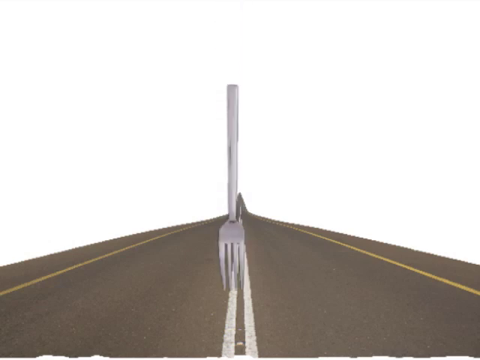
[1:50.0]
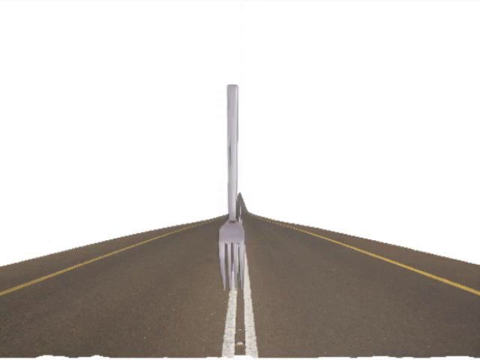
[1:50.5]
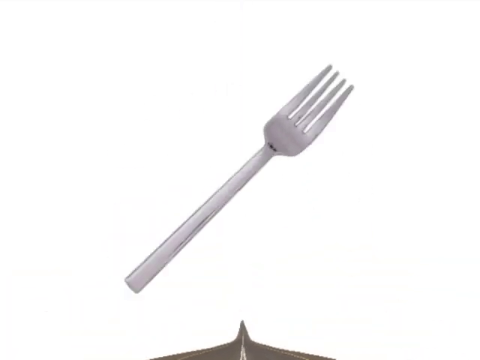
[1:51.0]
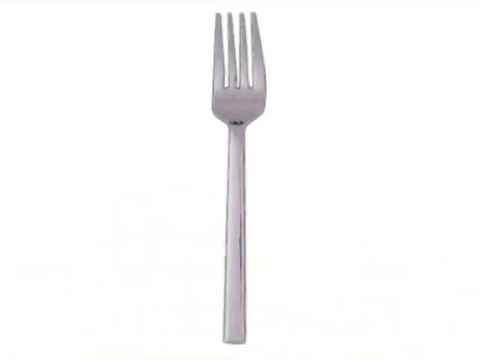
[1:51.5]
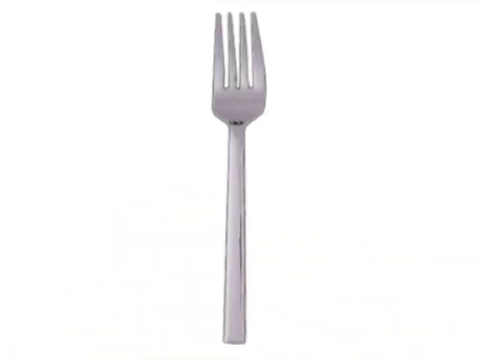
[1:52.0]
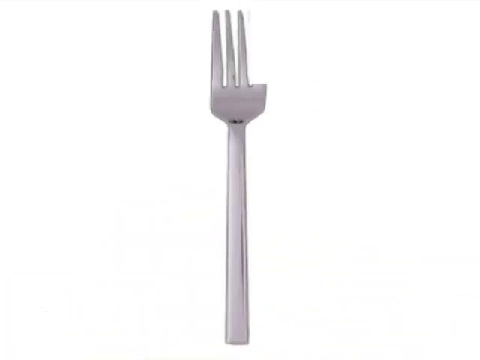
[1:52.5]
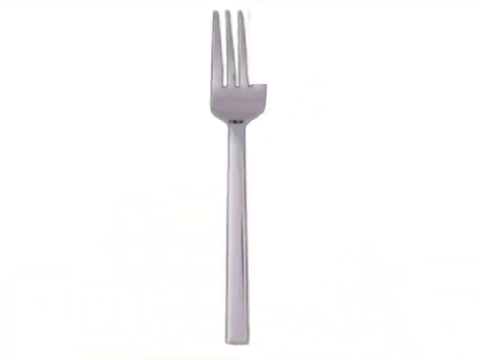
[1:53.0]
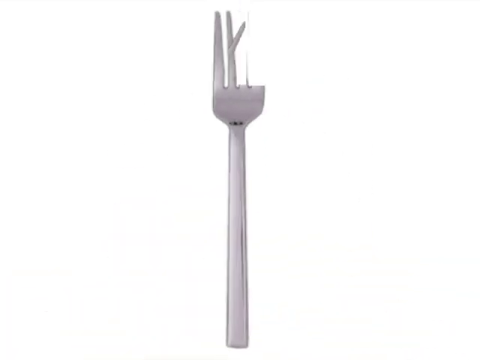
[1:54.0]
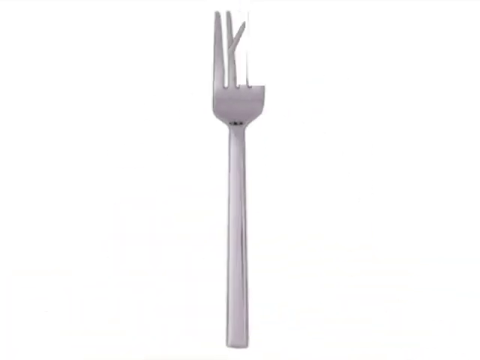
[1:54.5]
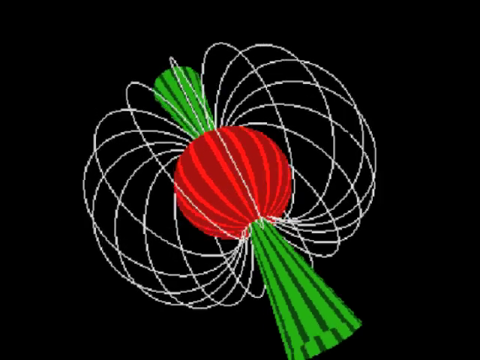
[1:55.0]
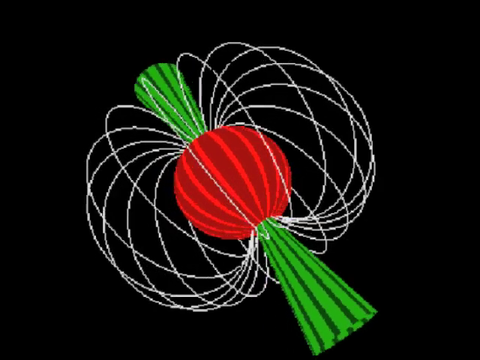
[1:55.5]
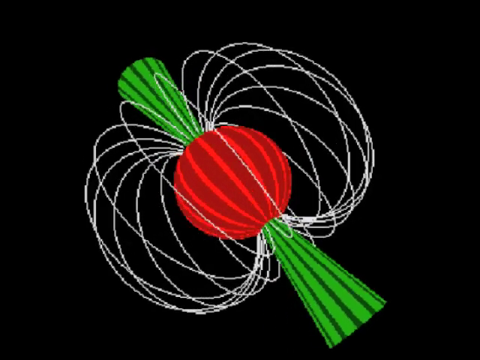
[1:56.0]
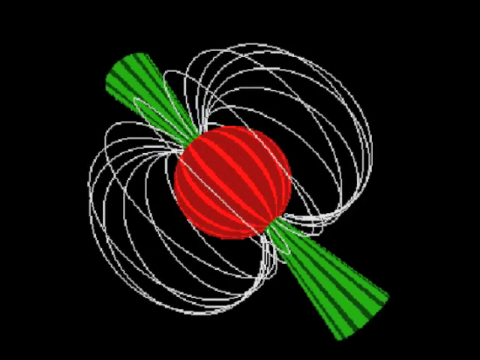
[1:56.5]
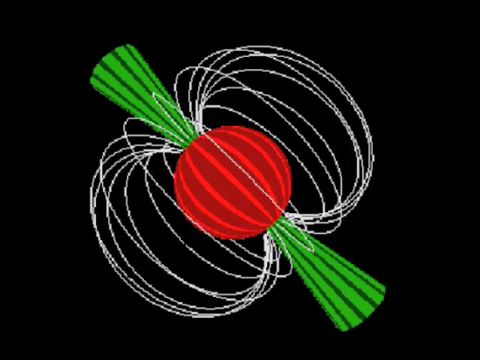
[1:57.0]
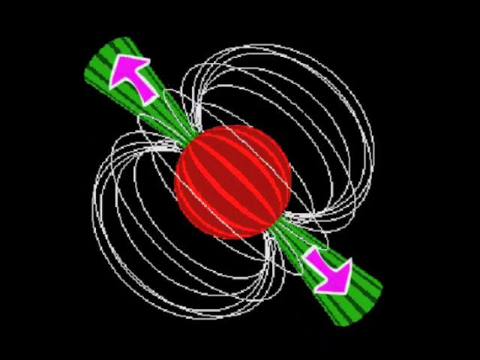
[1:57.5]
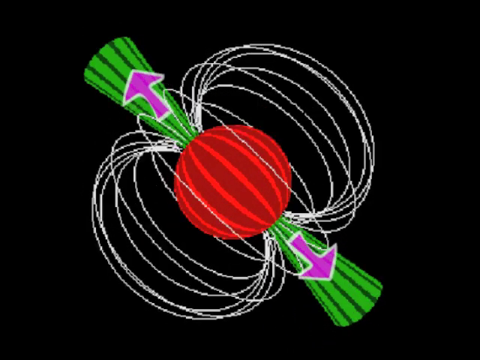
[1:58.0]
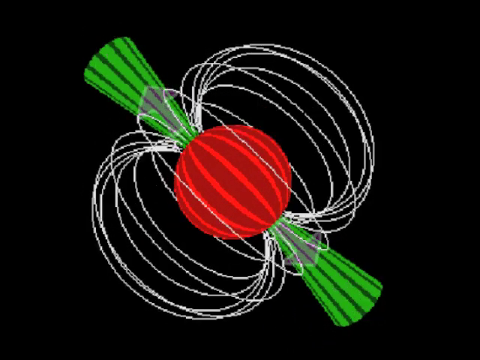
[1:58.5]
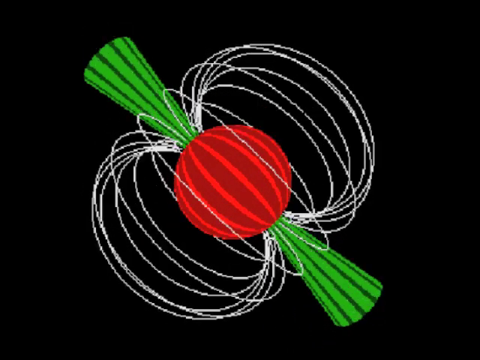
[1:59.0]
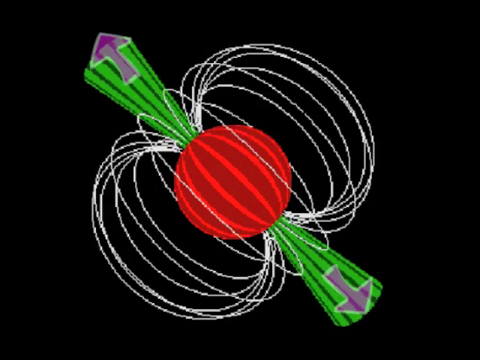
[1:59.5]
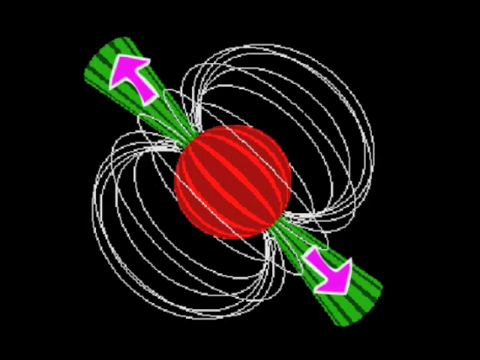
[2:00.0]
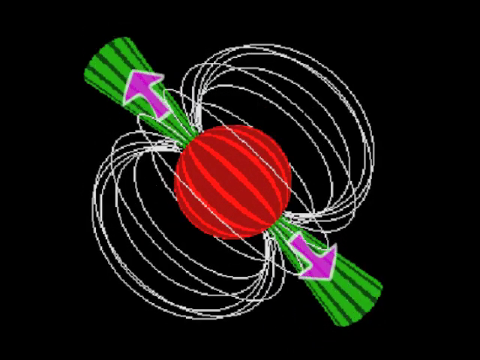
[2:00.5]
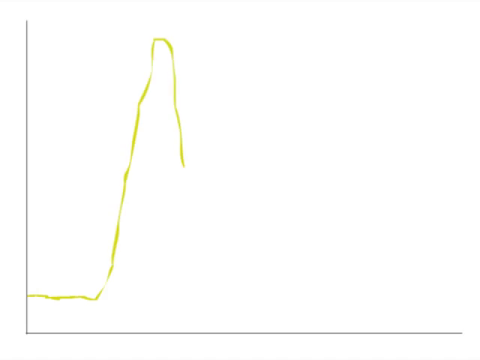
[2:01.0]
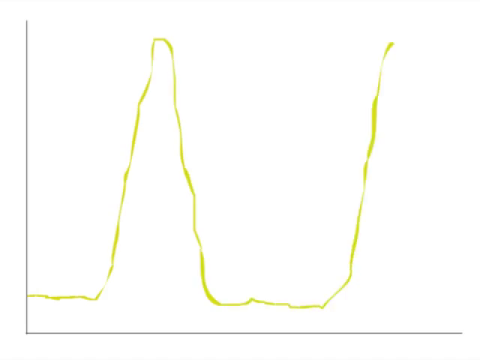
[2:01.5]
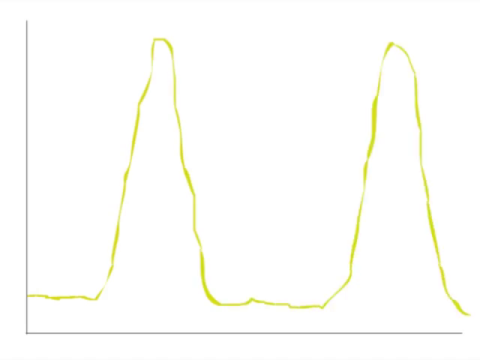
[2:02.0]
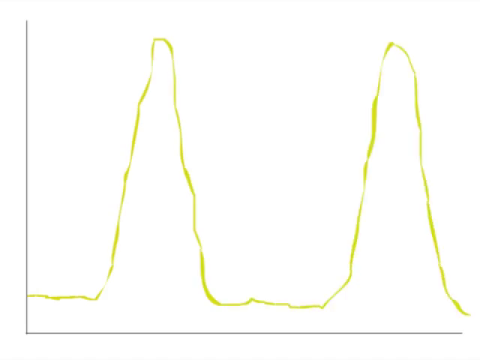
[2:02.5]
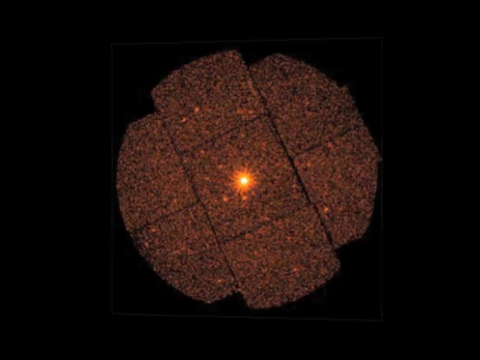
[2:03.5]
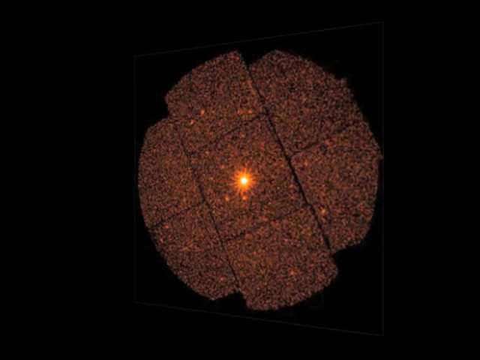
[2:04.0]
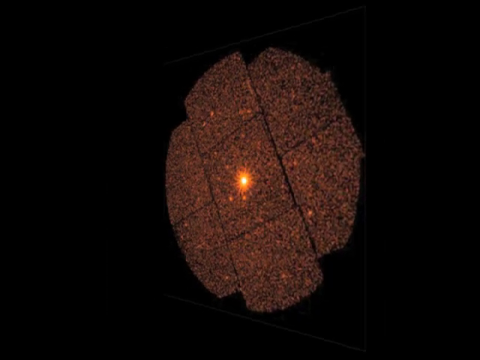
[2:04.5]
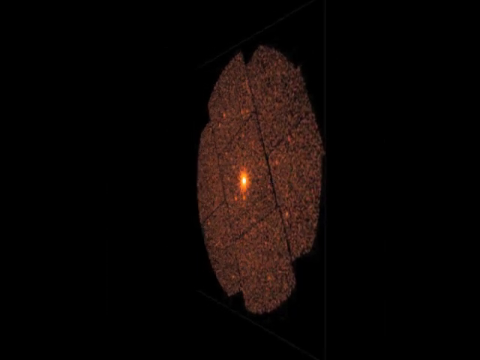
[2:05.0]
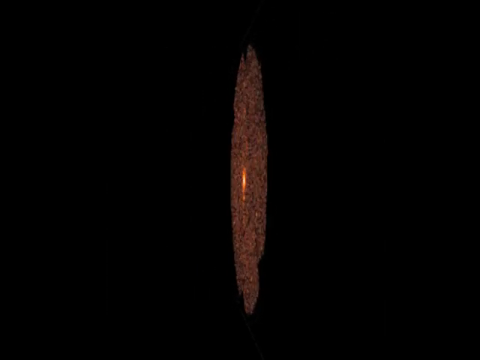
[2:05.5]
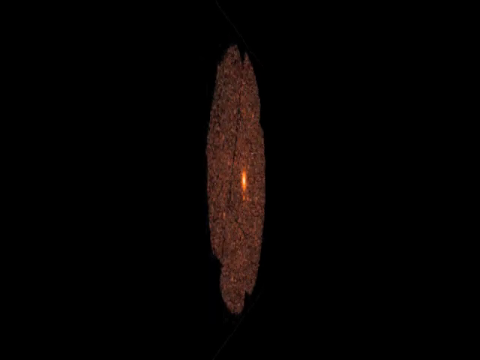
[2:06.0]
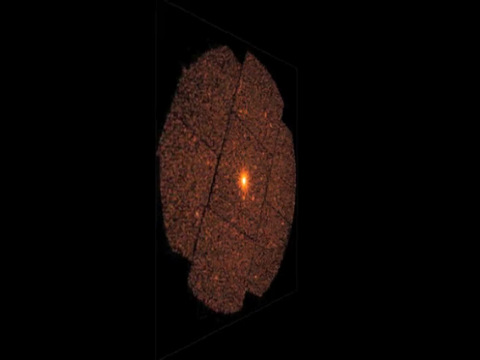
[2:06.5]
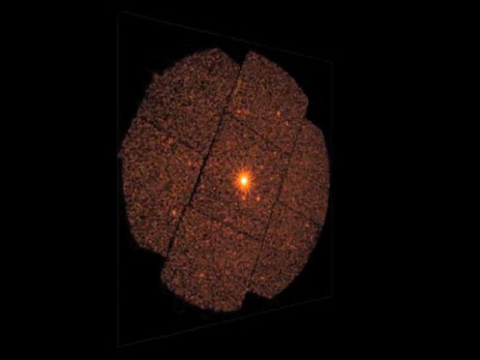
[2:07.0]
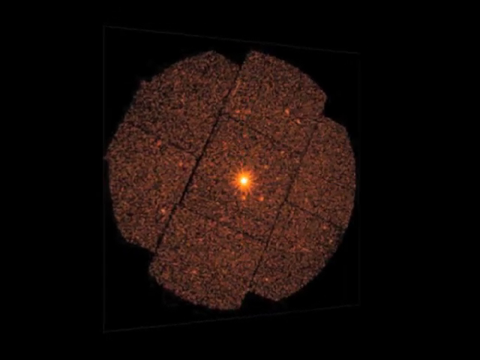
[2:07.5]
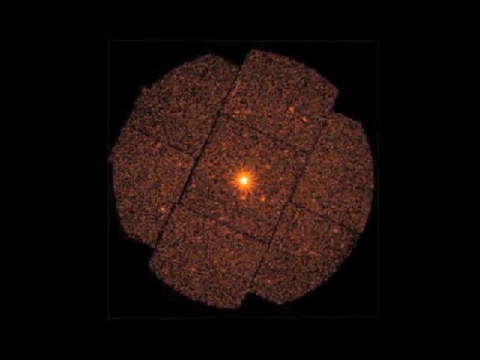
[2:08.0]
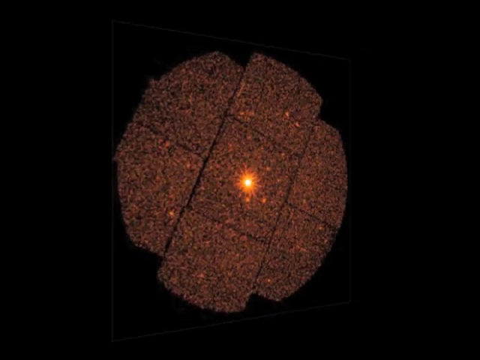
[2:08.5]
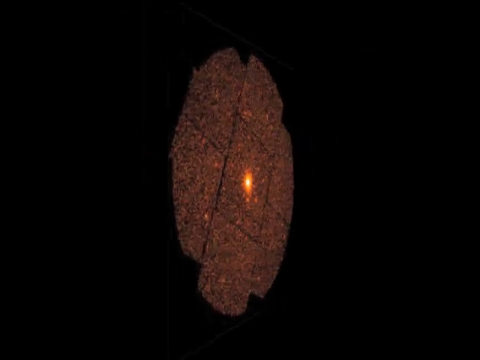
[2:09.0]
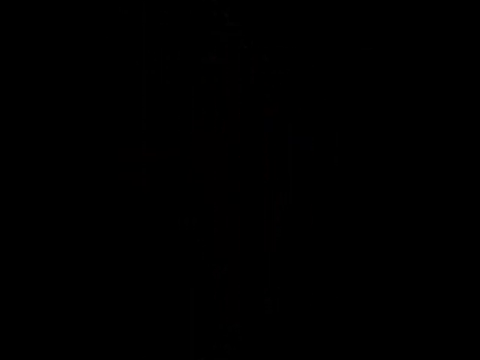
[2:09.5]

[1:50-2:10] The image of the fork in the road returns: a metal fork sticks into a greyish road that has two white lines and orange lines. The tine on the right side disappears, and the one next to it gets bent. A red ball appears with a green stripe going through it, like a rolled-up piece of paper. Something like a silver slinky surrounds both pieces. Purple arrows with white outlines point towards the outside of the green. Then something like a yellow graph appears, with a squiggly line that looks like cat ears.